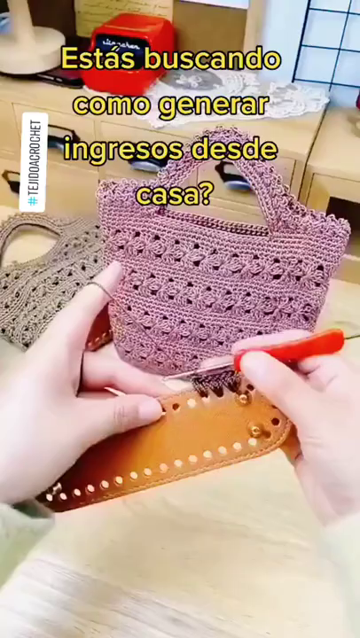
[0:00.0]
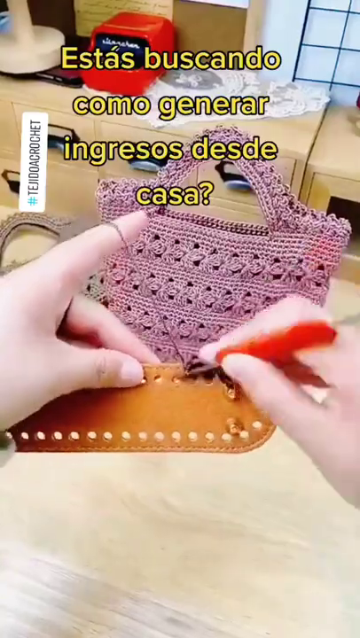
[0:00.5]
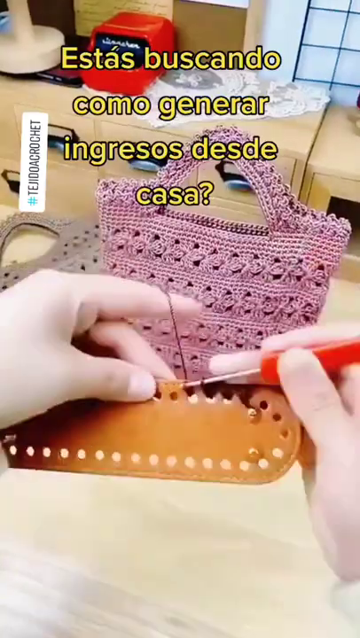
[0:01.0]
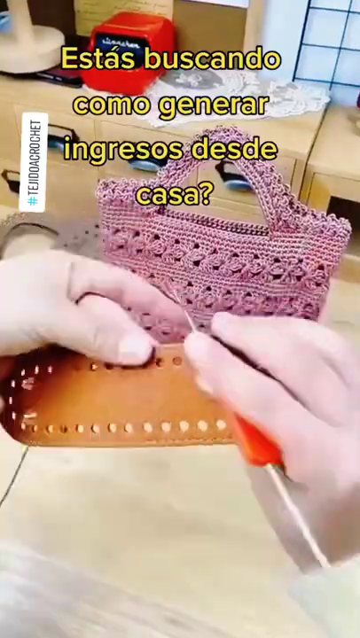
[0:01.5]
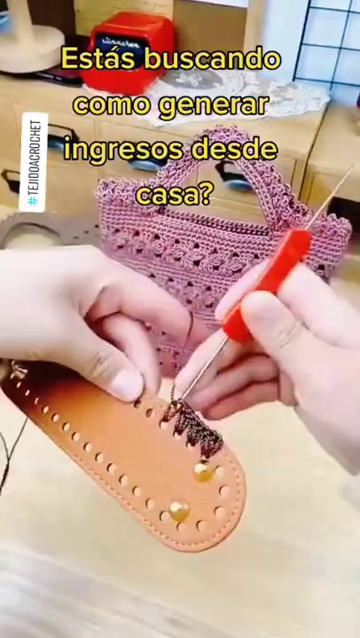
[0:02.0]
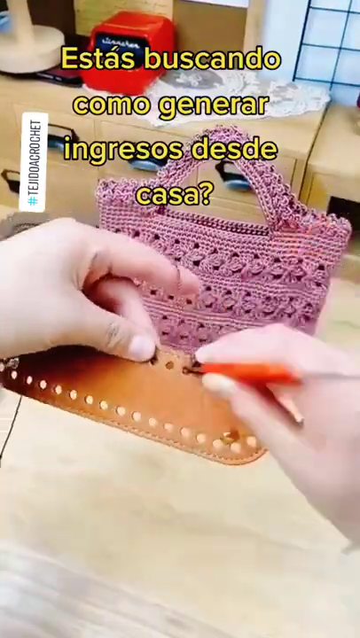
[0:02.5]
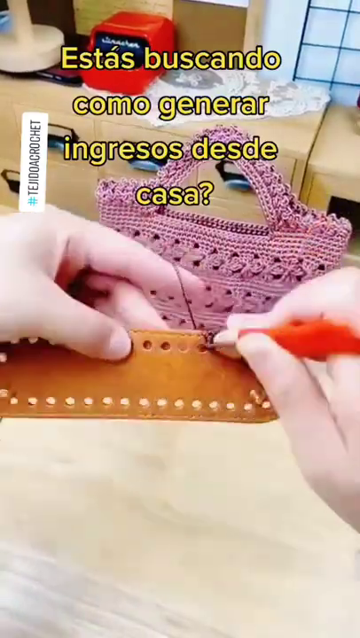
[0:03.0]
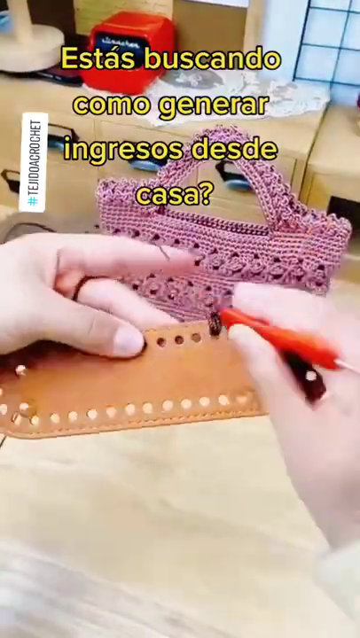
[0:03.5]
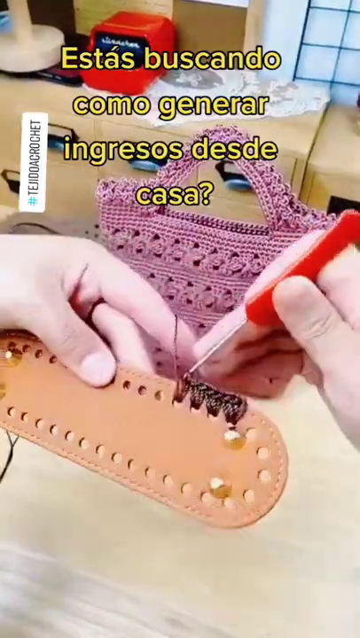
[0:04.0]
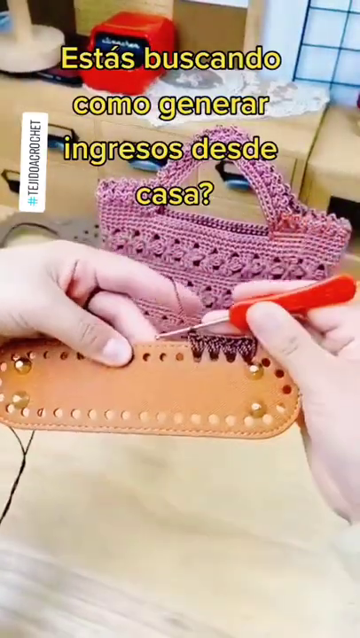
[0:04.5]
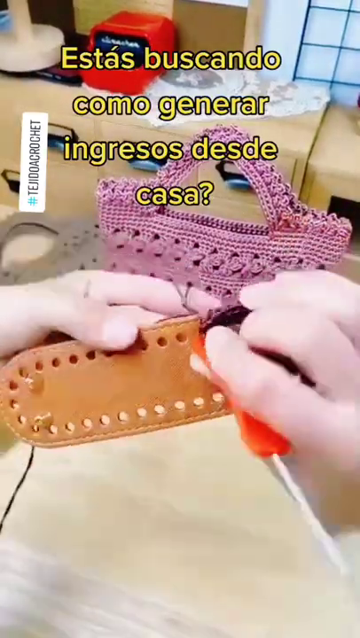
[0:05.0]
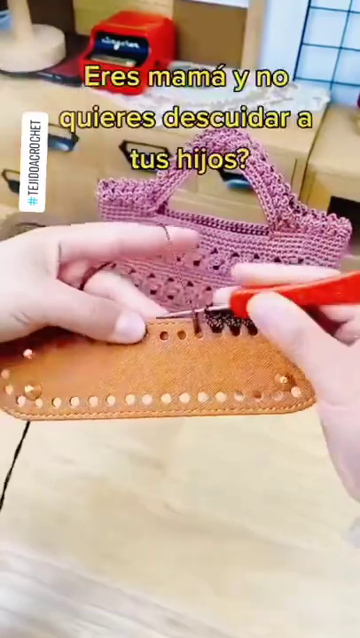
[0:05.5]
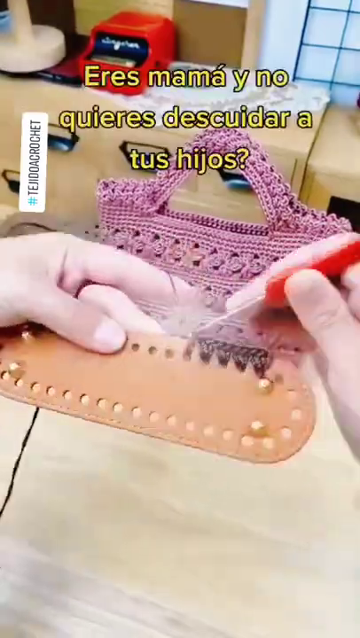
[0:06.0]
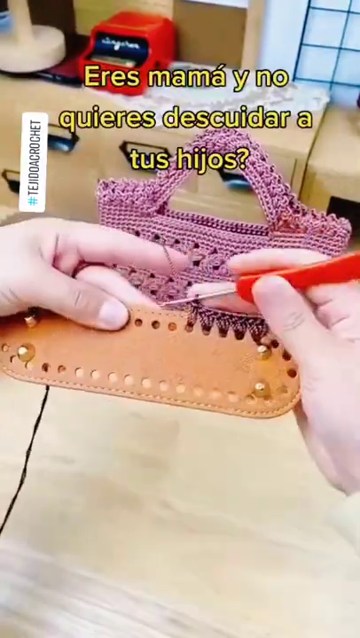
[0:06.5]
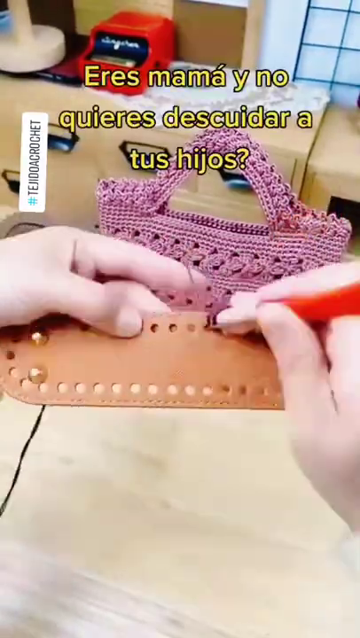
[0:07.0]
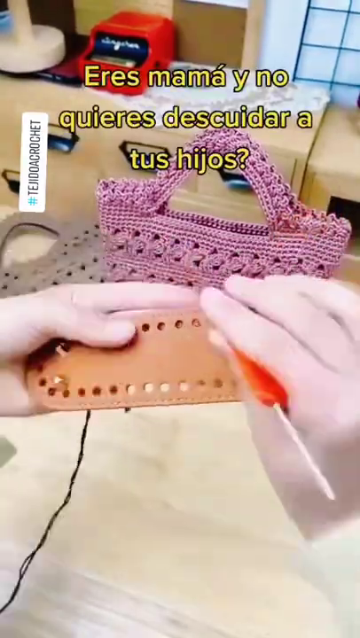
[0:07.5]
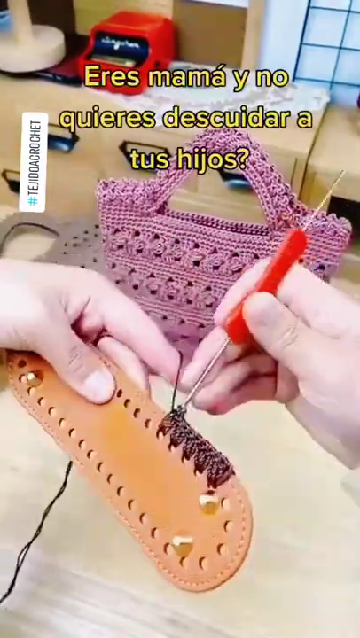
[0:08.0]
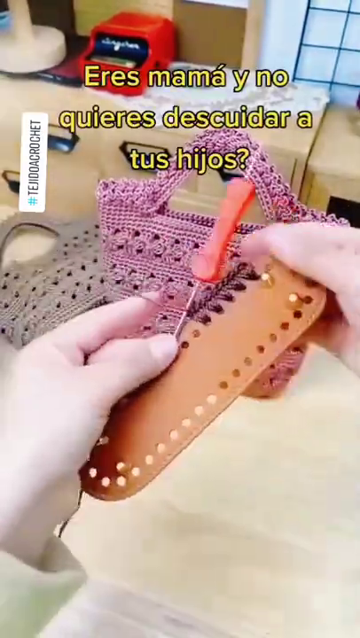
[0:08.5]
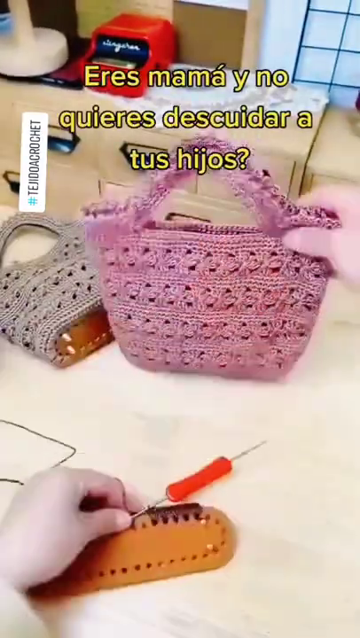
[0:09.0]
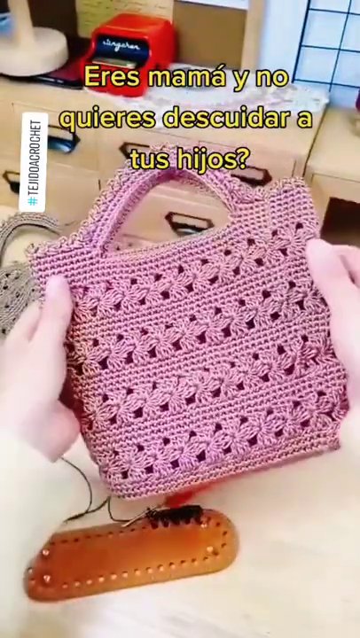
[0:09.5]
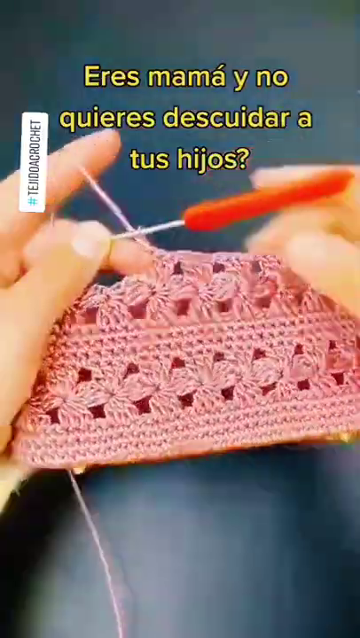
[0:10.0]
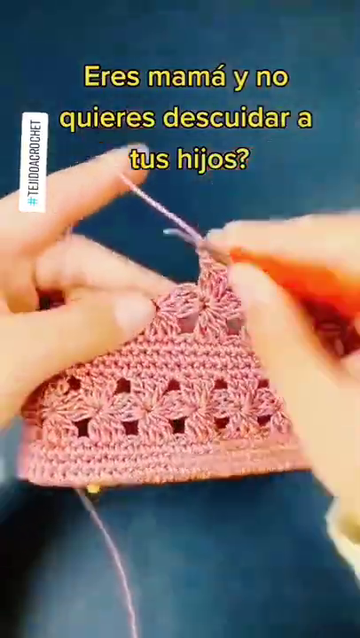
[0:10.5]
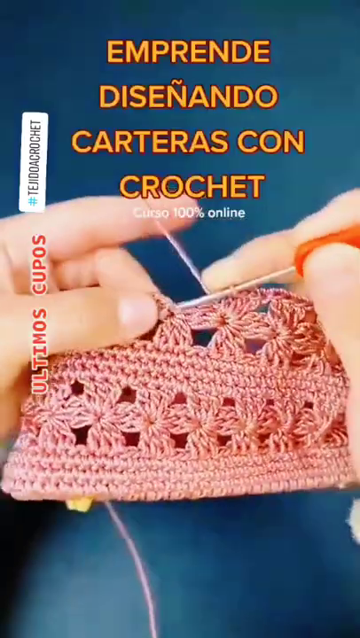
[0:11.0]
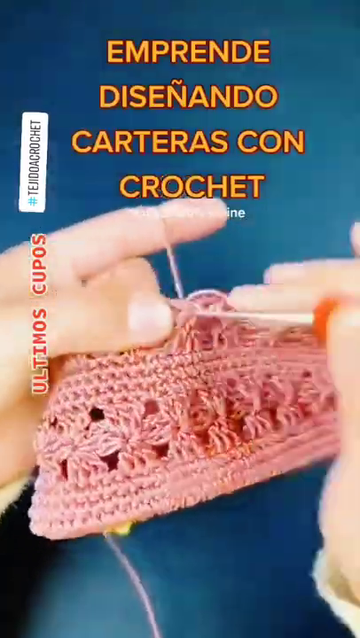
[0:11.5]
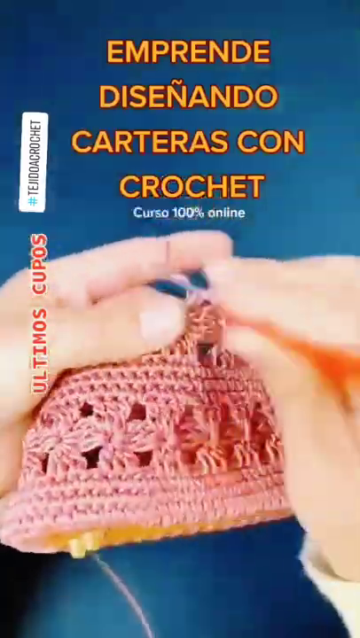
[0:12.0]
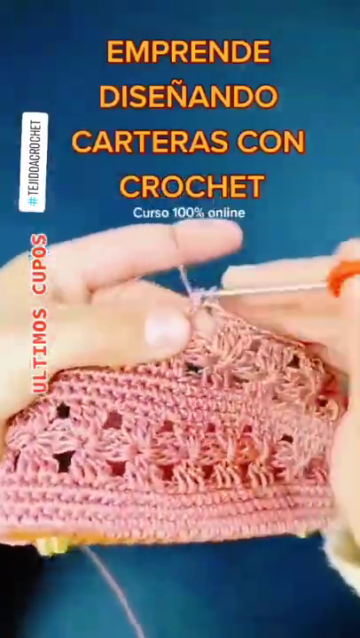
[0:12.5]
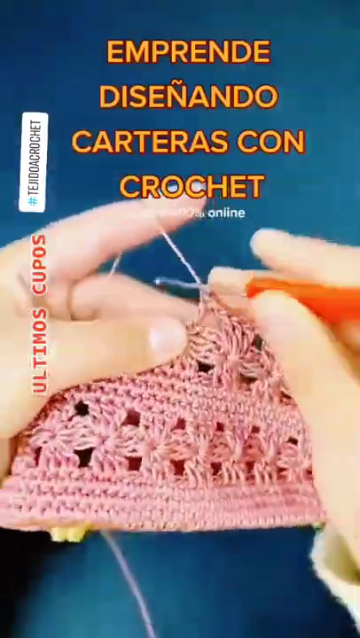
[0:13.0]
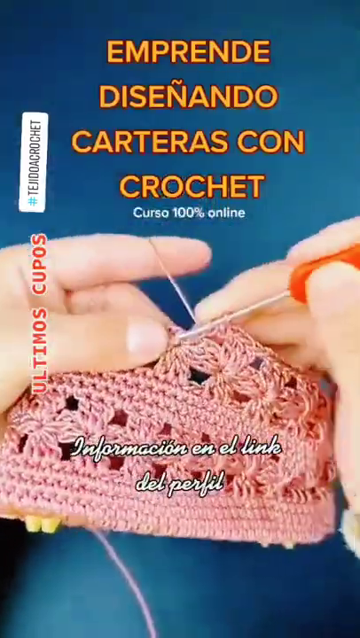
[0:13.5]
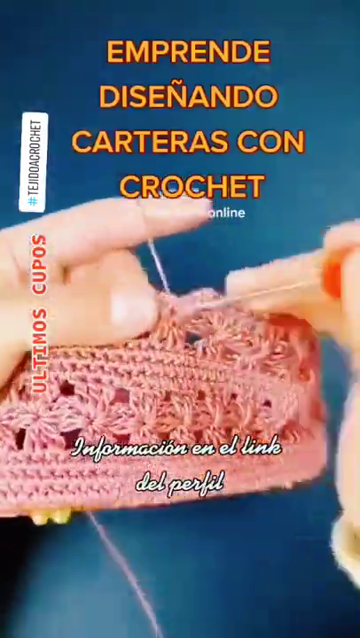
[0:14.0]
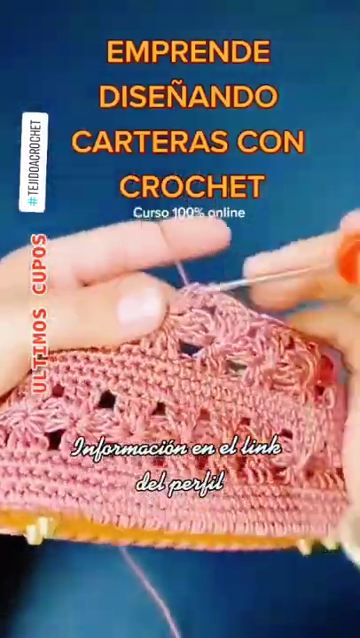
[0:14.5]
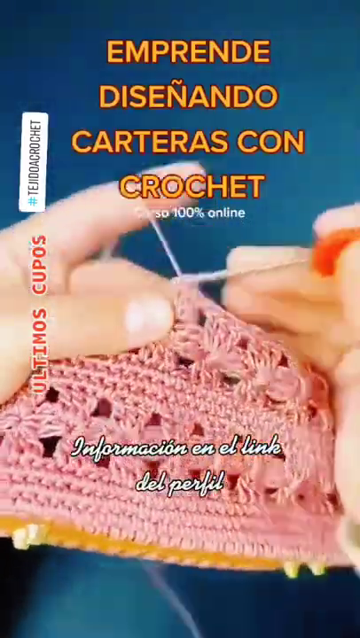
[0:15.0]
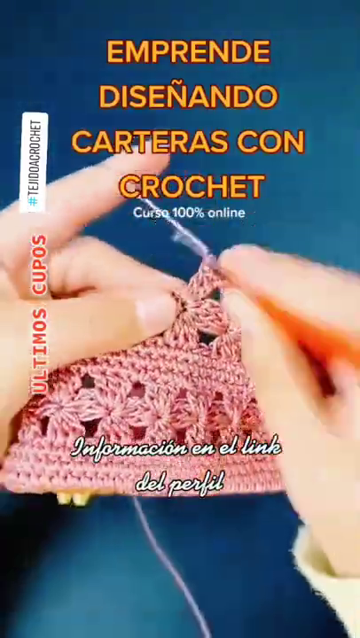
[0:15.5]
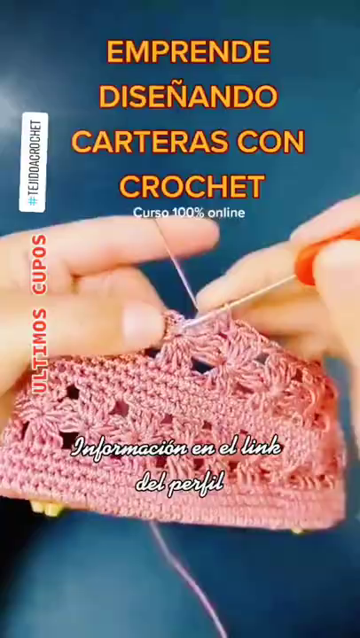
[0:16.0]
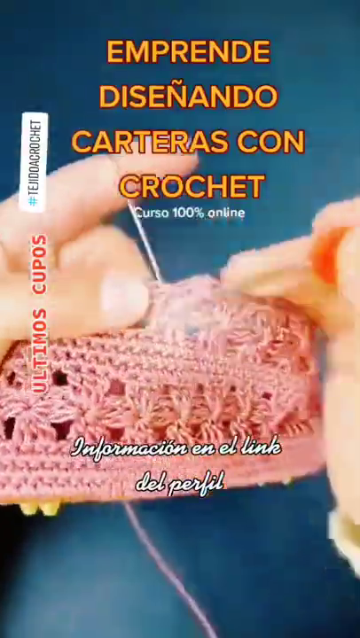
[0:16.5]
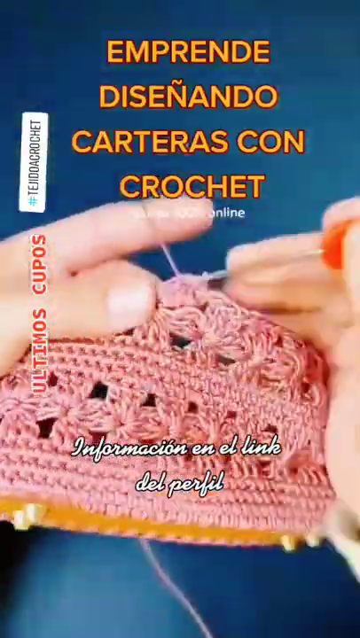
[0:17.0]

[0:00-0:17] The scene opens on a wooden table. In the background there are various things on a shelf, and in front of it a small add-on with drawers in a library file card style. In front of that is a small handbag that appears to be crocheted; it is pink, and another one in beige is lying behind it. A pair of hands then holds a piece of leather with cutouts, apparently knitting or crocheting black thread into the base of this leather piece, which has holes all the way around. The camera pulls back, showing the hands crocheting pink thread onto the leather base. The video then cuts to the bag crocheted about halfway, showing the finger technique of the person crocheting. The camera pulls back to show the full pattern of the bag before the hands turn the bag to the side, revealing the stitching of the leather portion to the upper part of the bag.